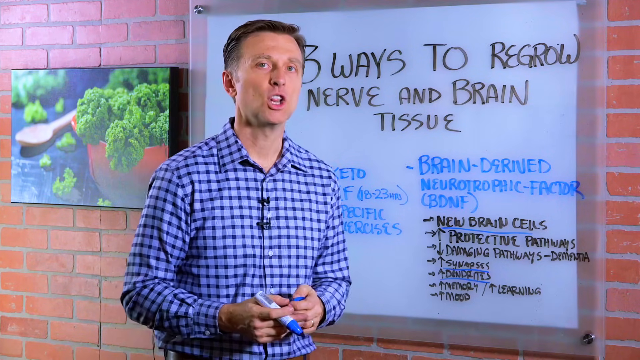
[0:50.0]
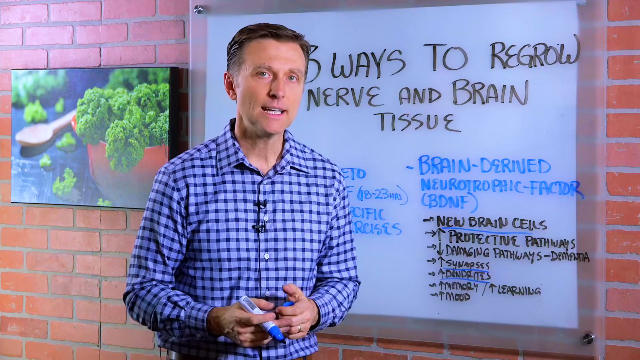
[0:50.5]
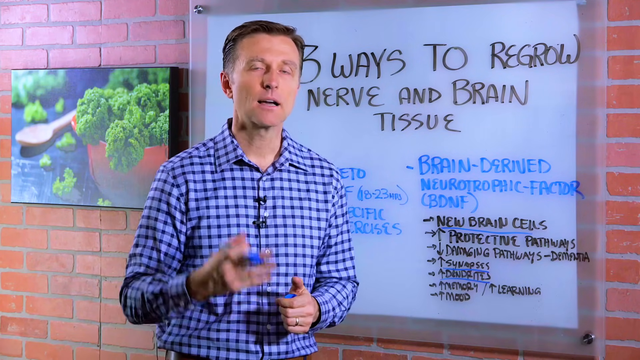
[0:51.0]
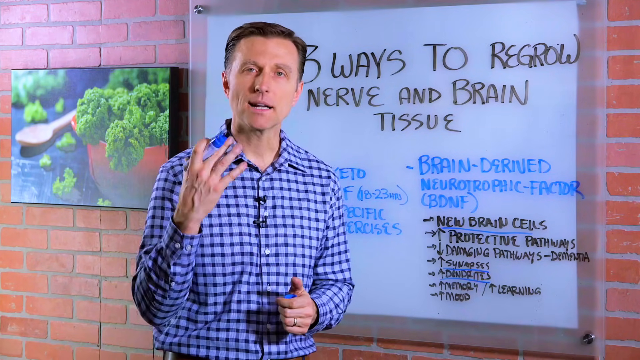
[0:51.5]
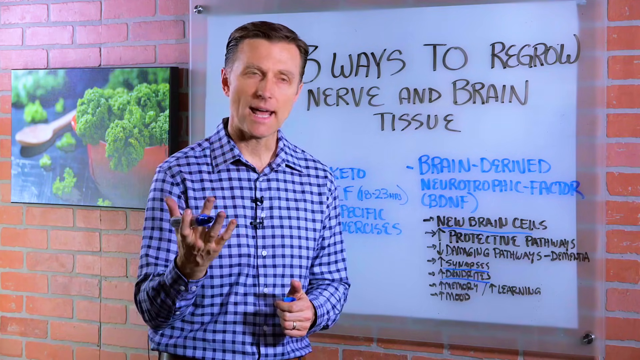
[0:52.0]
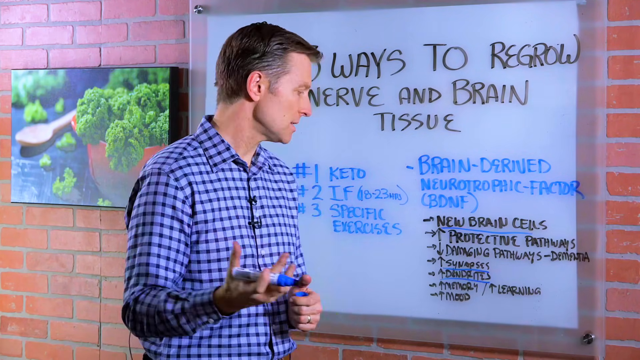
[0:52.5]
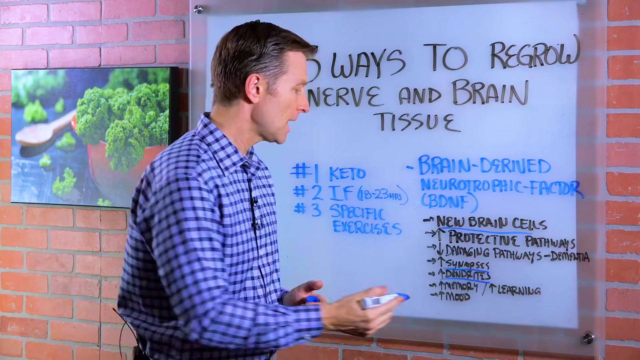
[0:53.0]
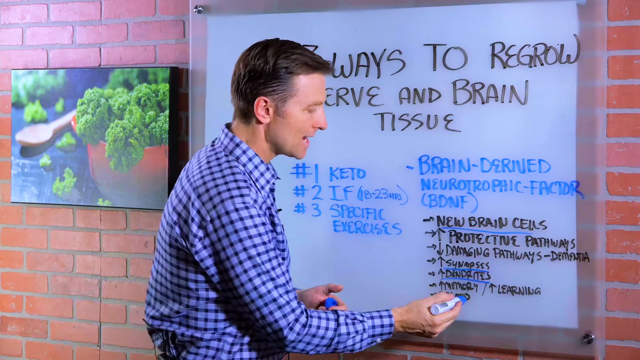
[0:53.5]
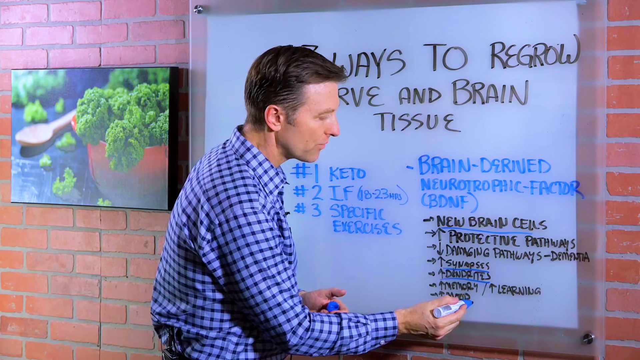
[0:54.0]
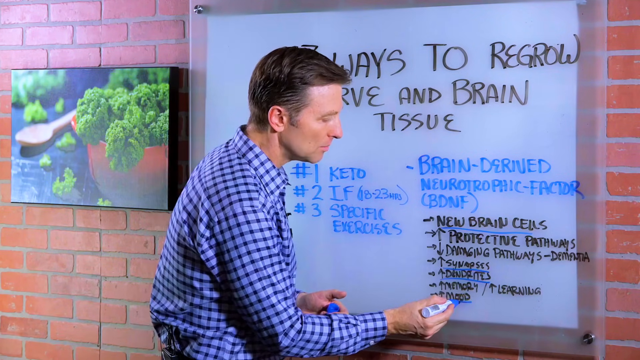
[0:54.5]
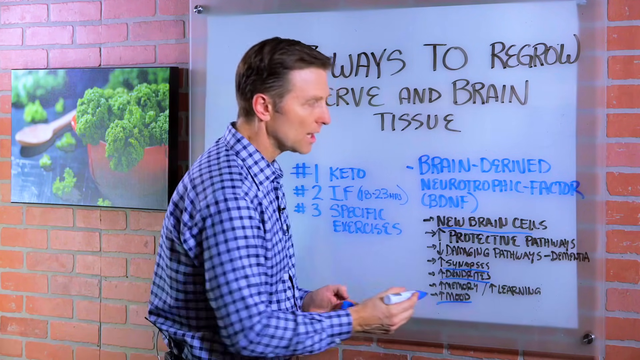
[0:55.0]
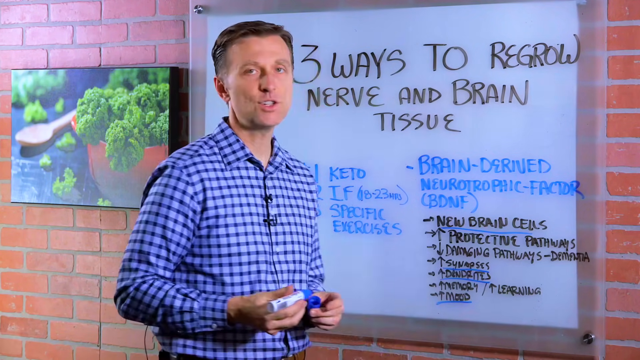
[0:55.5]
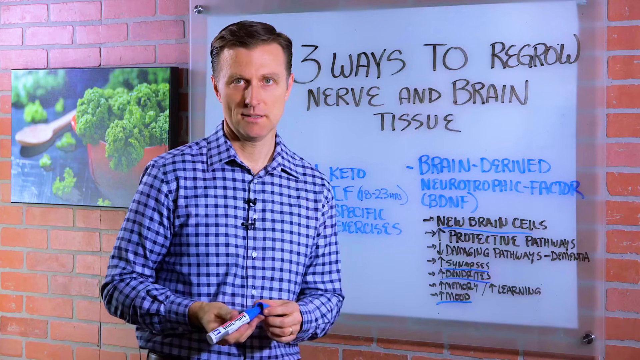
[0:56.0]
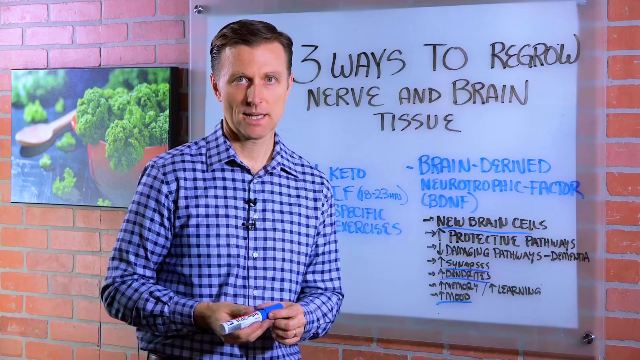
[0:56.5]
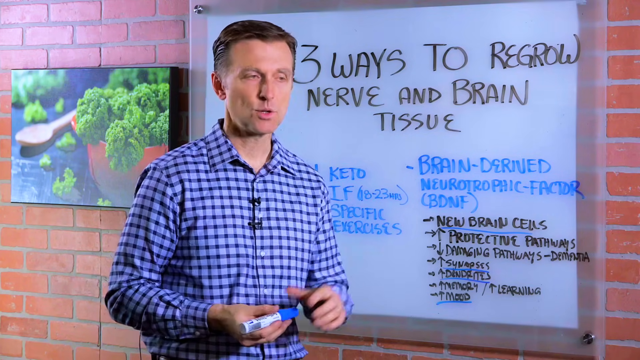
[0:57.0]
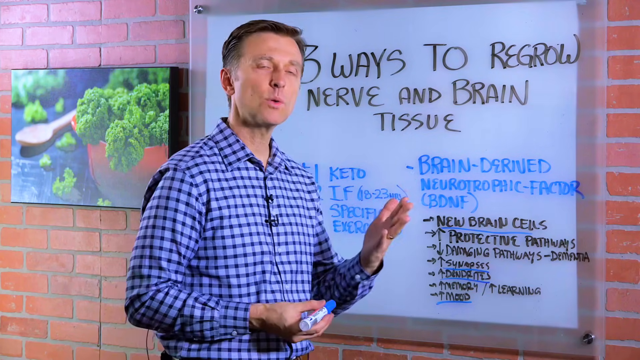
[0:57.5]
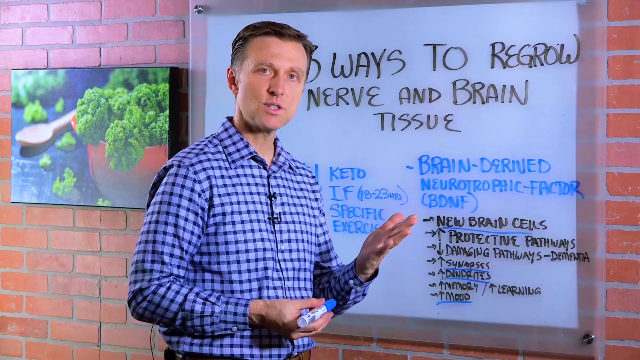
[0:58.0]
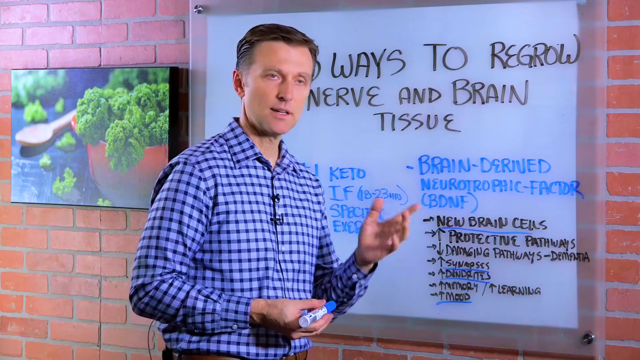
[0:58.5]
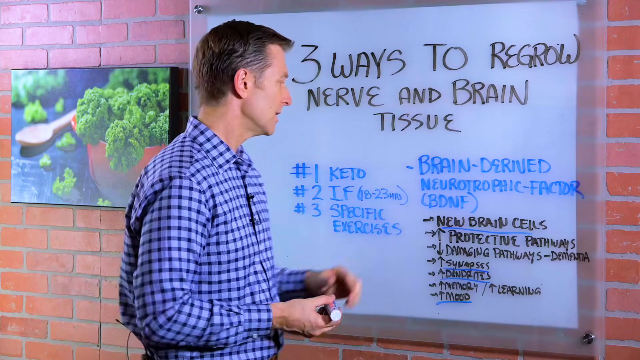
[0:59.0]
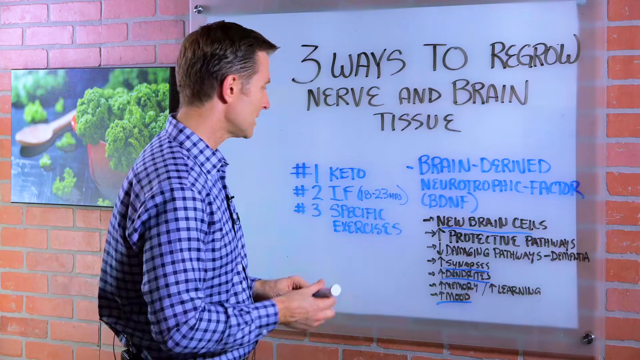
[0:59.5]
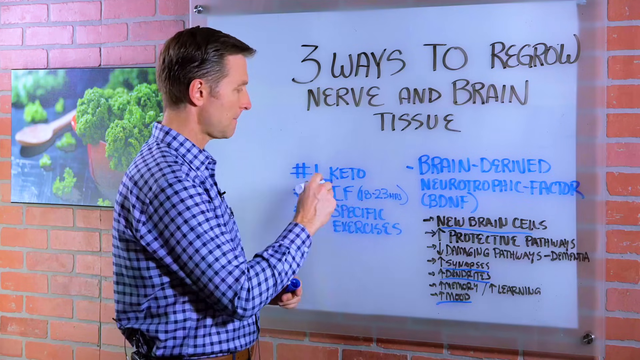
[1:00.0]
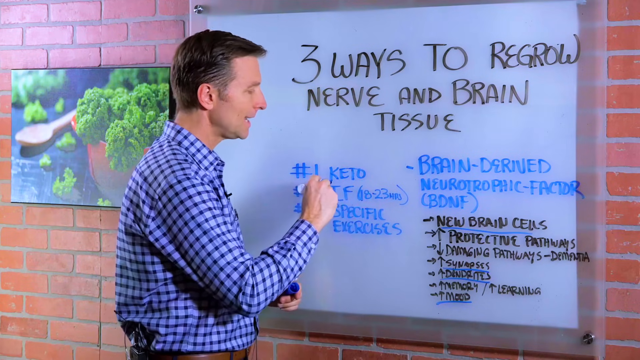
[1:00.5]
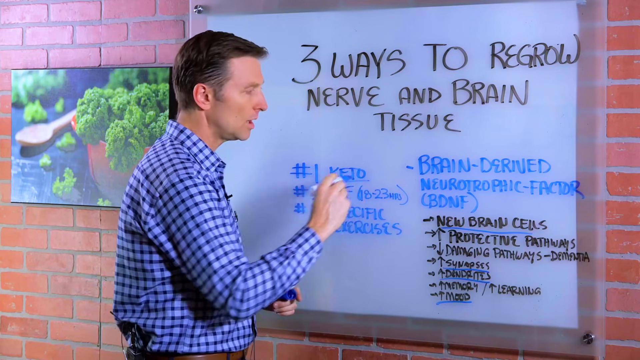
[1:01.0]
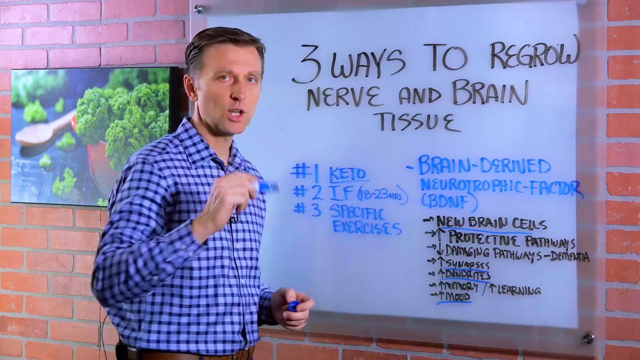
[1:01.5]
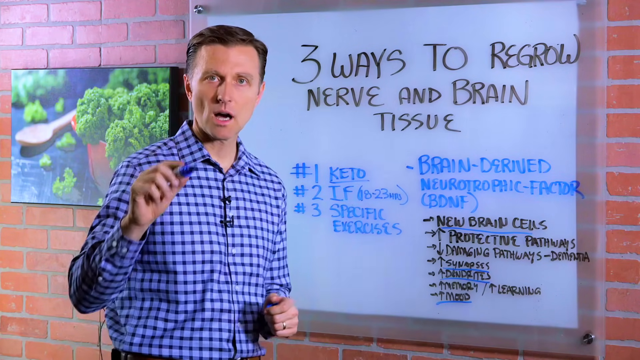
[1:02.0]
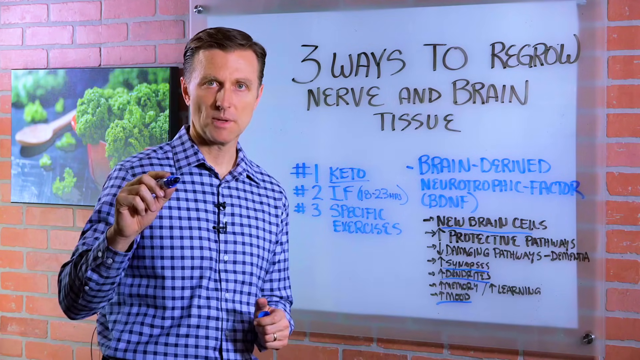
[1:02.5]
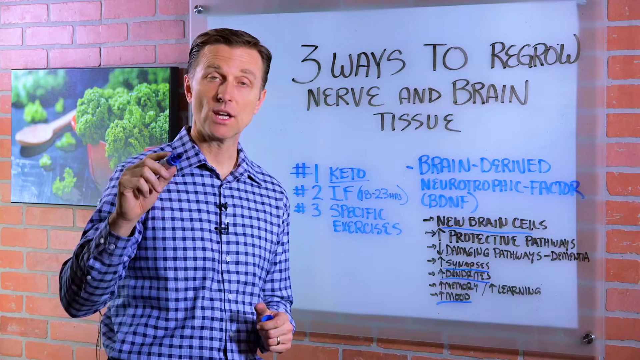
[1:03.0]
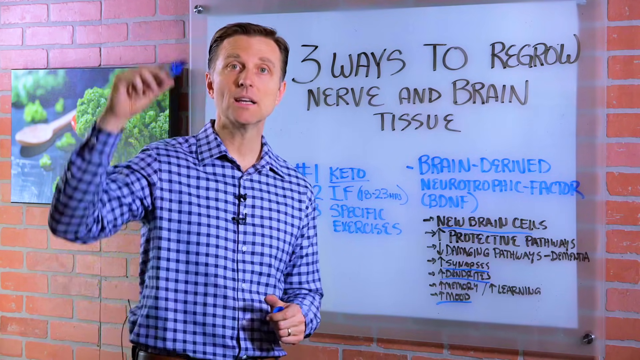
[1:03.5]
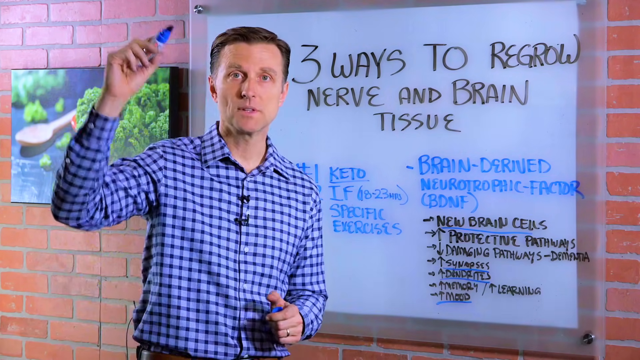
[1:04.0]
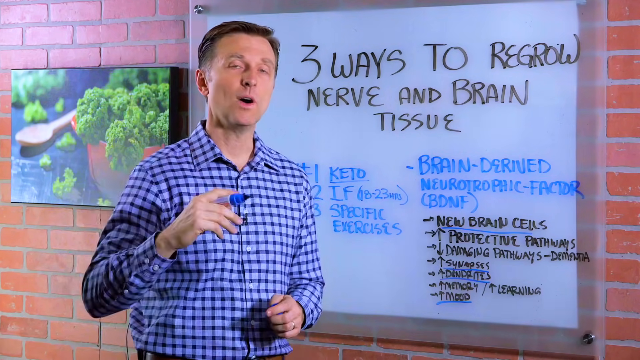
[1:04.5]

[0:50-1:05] A man talks to the camera, then turns and looks at the board, appearing to hold a blue marker. He highlights "keto," which is already written on the whiteboard, and also highlights a word already written in black ink that says "timed," then highlights "keto" and starts talking to the camera again. The whiteboard is covered in writing in black and blue ink. The title at the top reads "three ways to regrow nerve and brain tissue." On the left side is a numbered list from one to three: "keto" at number one, "IF" next to number two, and "specific exercises" at number three. On the right side, in blue ink, it says "brain derived" and "neurotrophic factor," and below in black ink are about six or seven more items, apparently topic points.